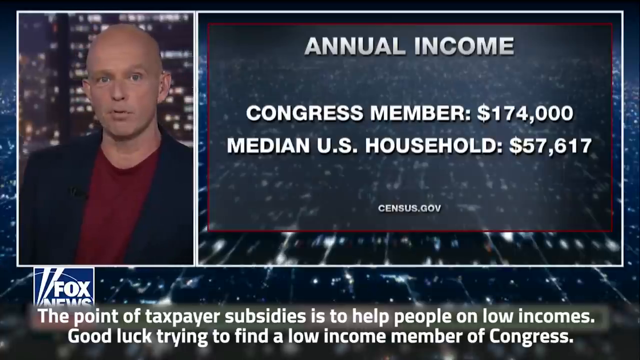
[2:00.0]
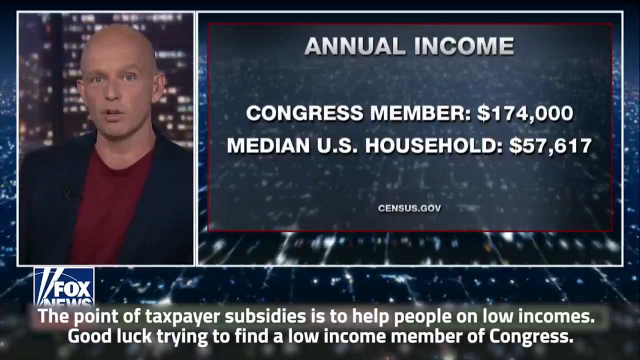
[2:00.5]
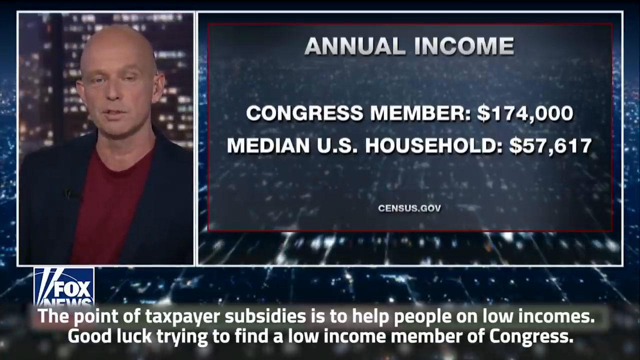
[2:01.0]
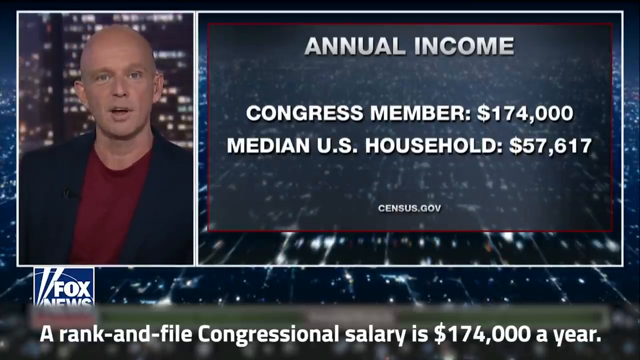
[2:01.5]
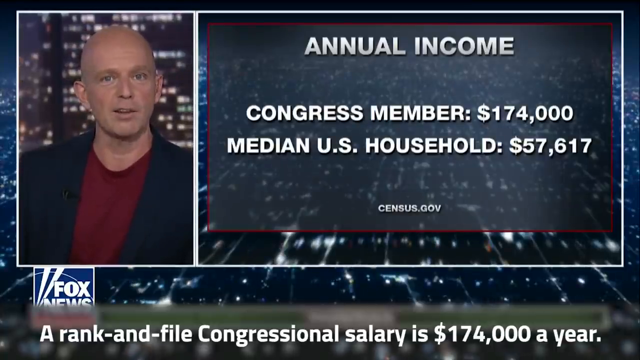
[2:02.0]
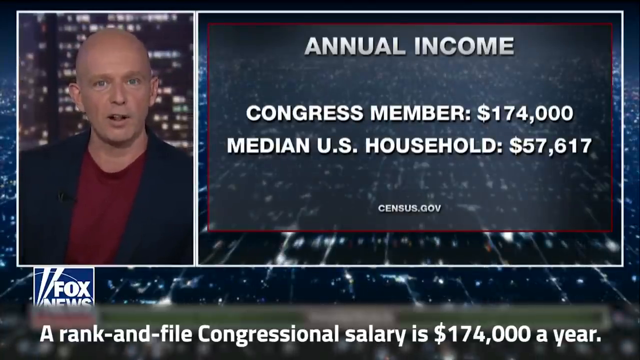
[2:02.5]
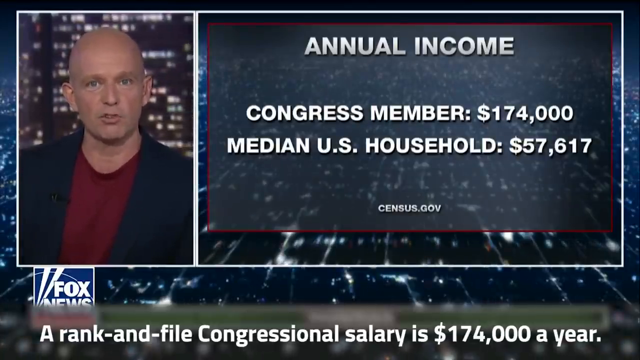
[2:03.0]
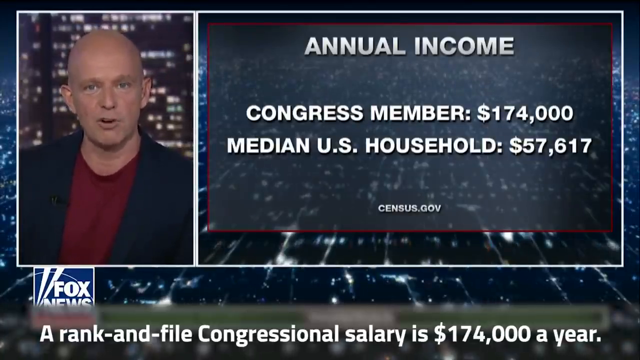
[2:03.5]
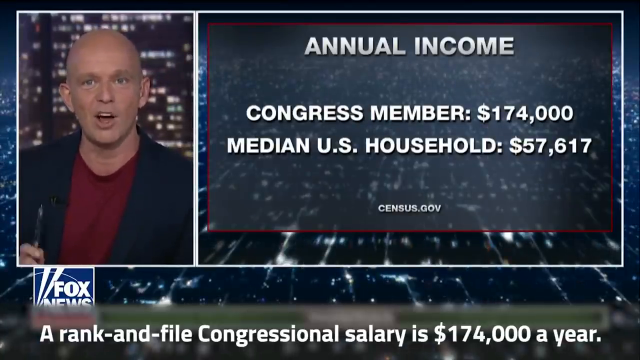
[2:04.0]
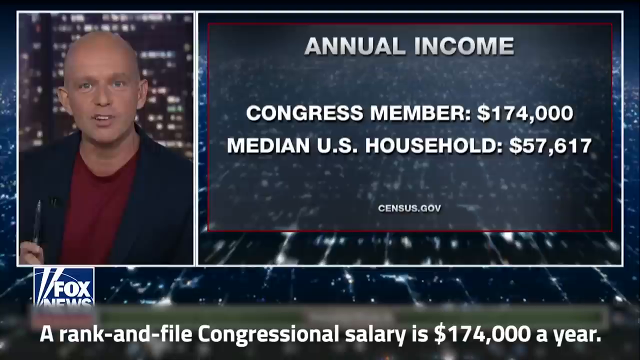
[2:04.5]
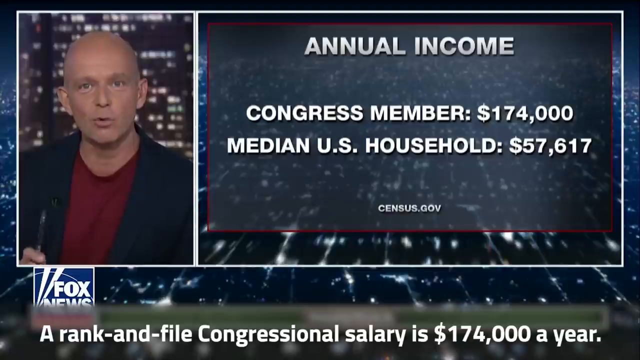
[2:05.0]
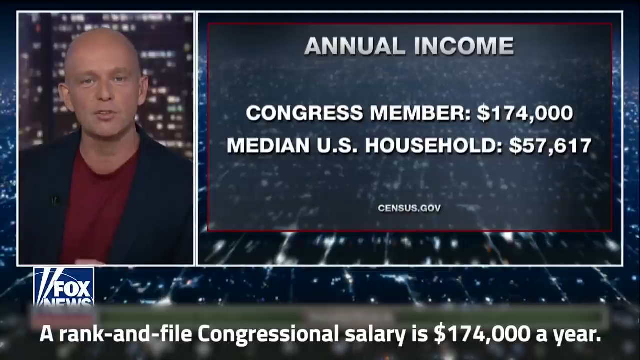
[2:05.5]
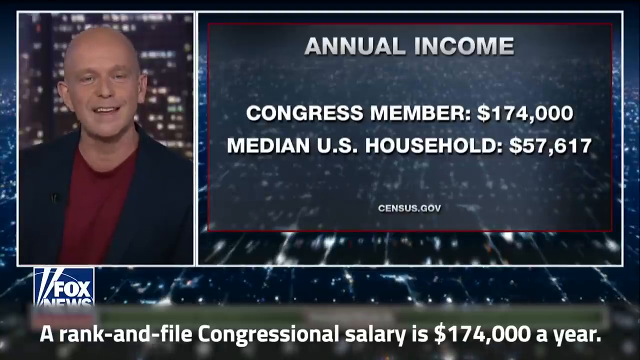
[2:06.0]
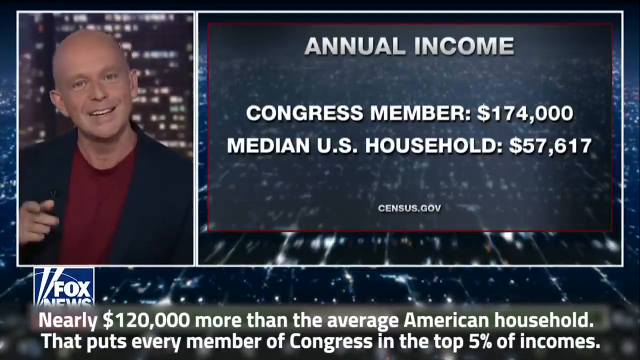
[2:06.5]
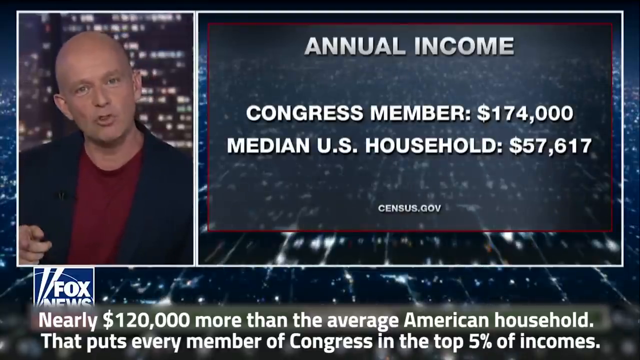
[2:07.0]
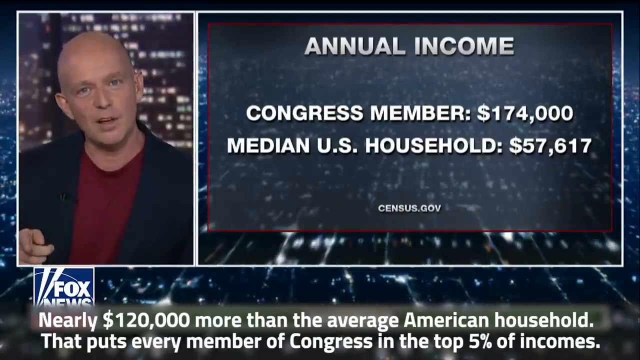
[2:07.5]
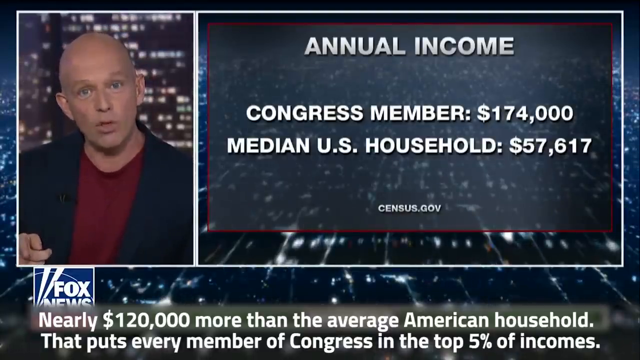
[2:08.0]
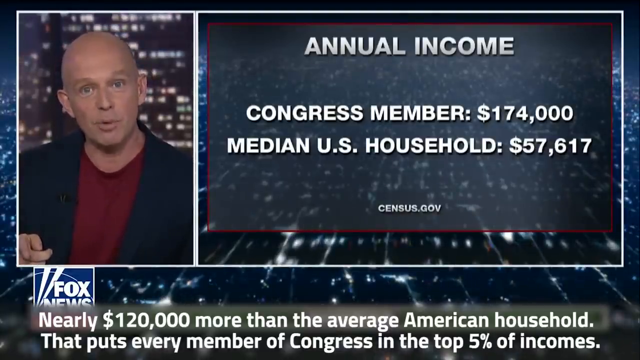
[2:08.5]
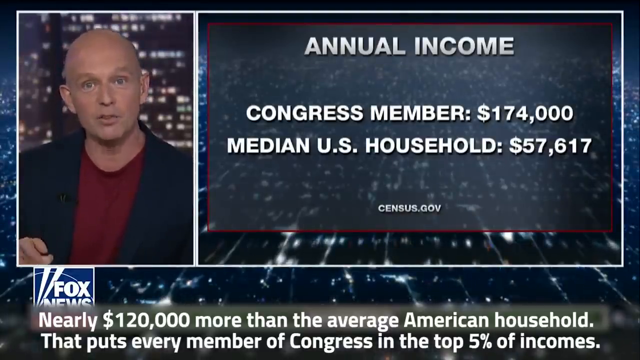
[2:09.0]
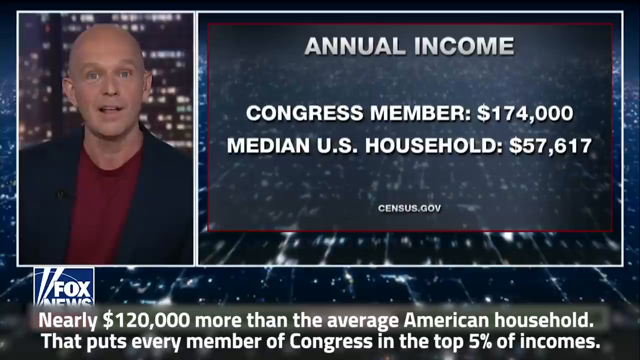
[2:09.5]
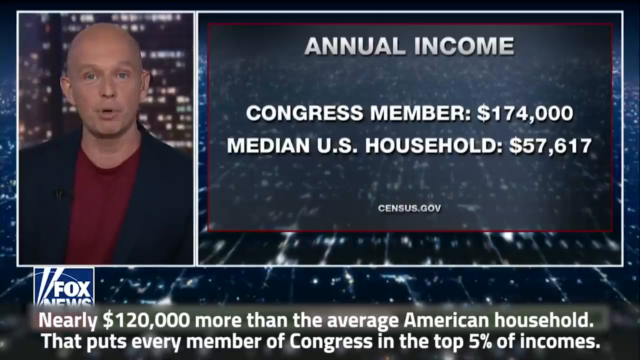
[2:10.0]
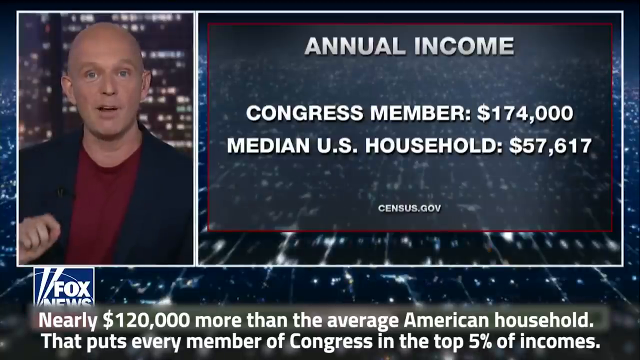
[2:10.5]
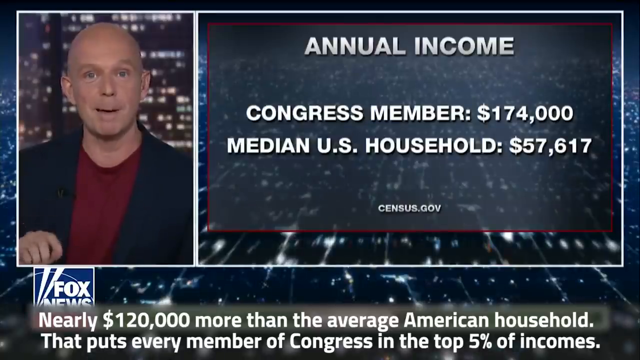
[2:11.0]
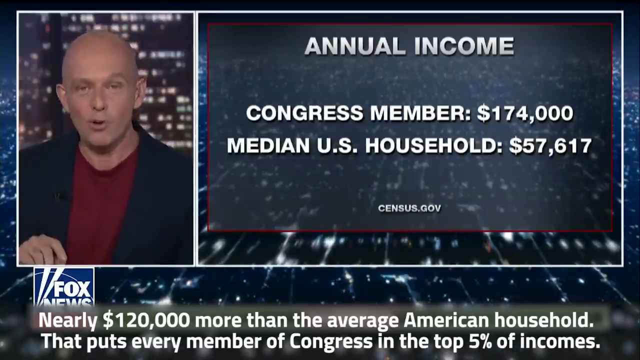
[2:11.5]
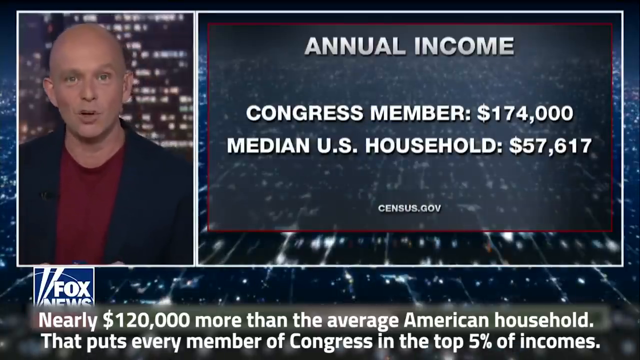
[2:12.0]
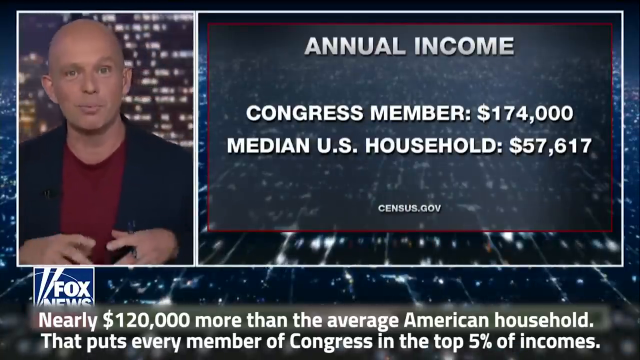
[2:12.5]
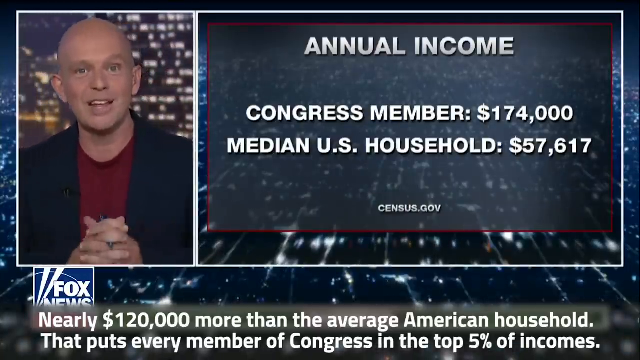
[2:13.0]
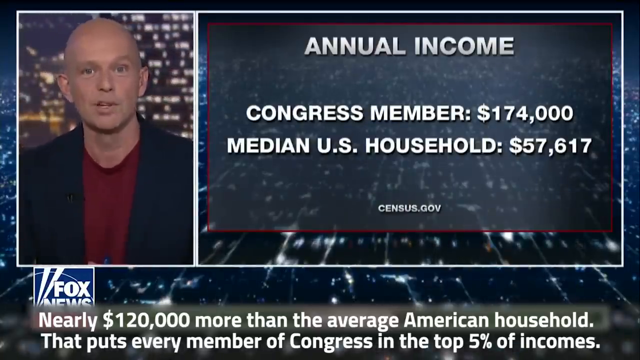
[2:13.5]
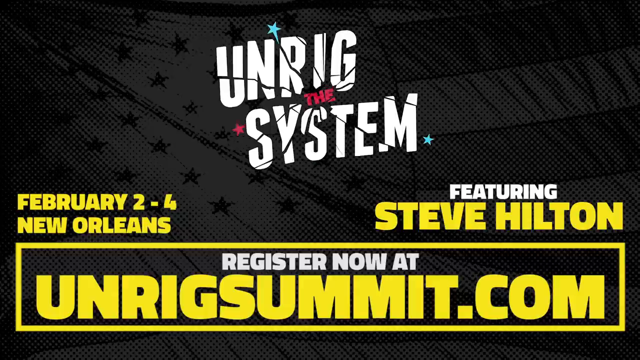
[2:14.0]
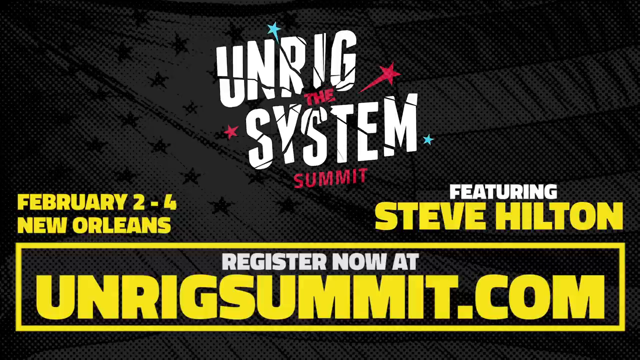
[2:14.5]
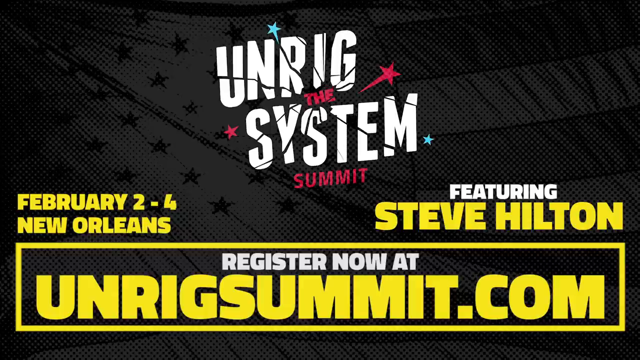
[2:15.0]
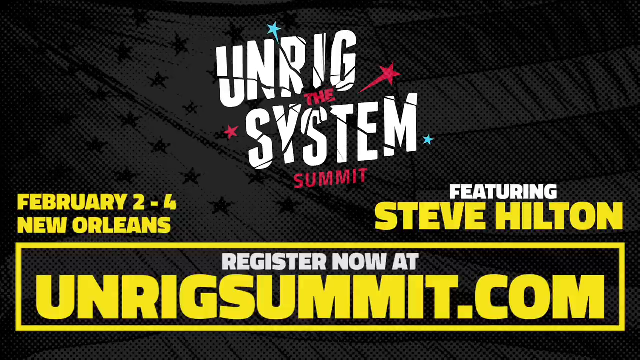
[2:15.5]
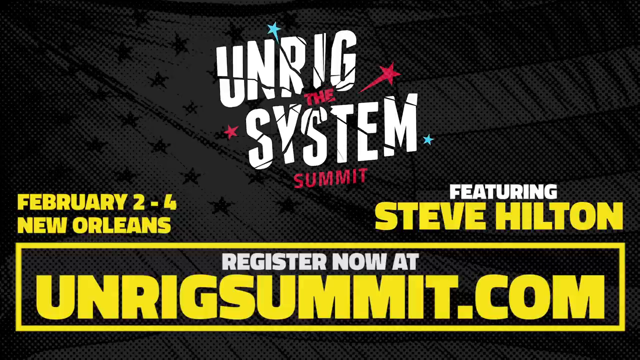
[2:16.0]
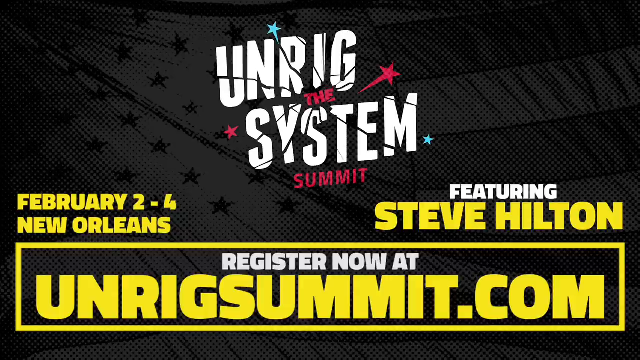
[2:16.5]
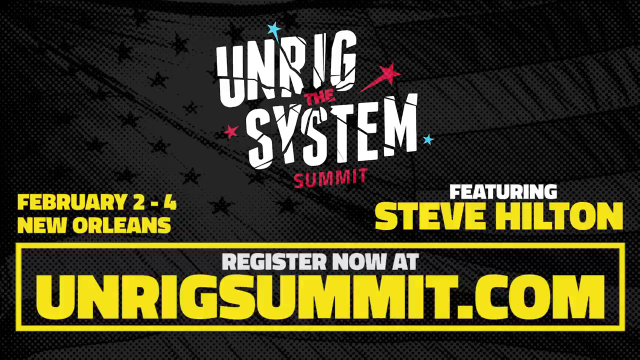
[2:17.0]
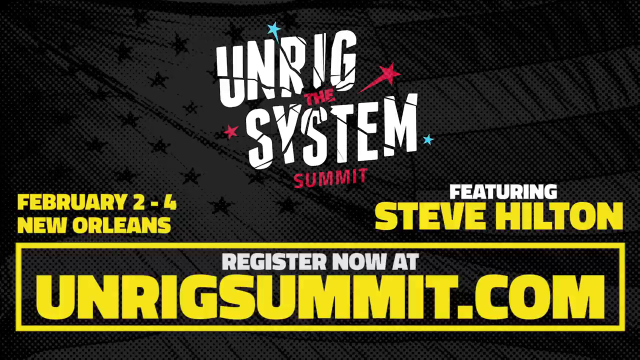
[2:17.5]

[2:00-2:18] The Fox News reporter is shown against a city background at night, with lights at the back and lights in the buildings. He is bald and wears a maroon shirt and a blue blazer, reading and explaining the news. Beside him is a model daily schedule listing hours and activities: four hours of call time, one to two hours of constituent visits, two hours of committee floor and one hour of strategic outreach. A Times newspaper item by Steve Israel, a confession of a congressman from 2016, is also referenced.